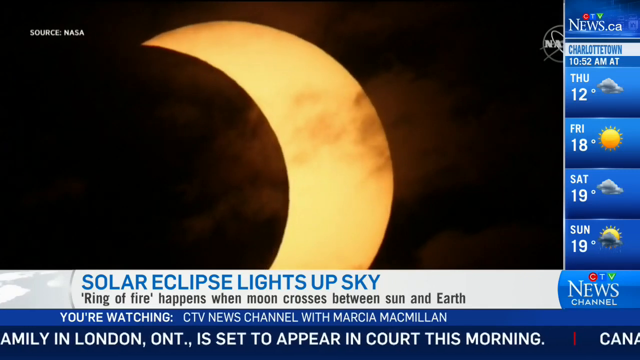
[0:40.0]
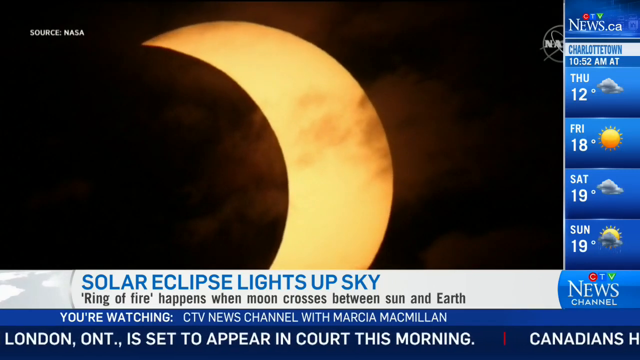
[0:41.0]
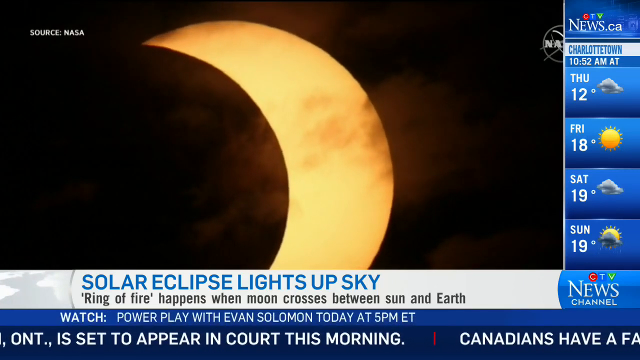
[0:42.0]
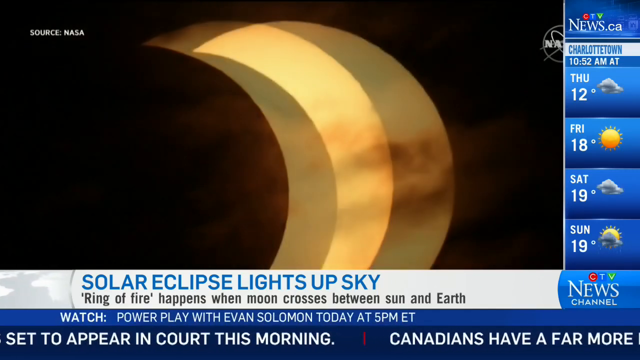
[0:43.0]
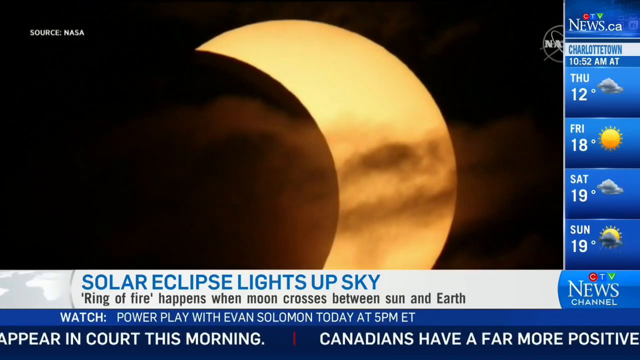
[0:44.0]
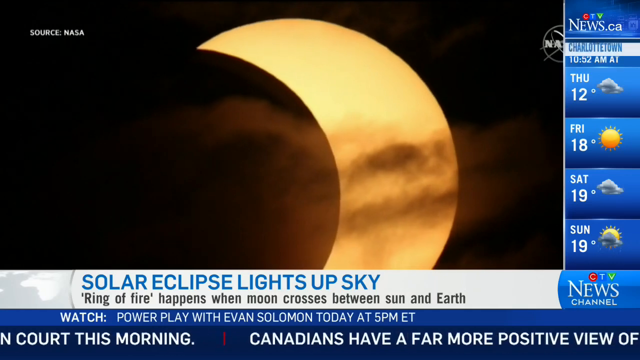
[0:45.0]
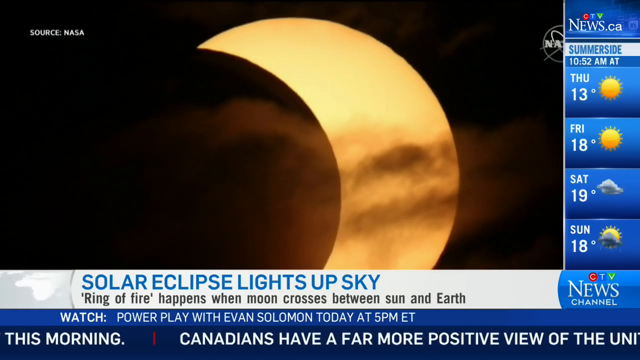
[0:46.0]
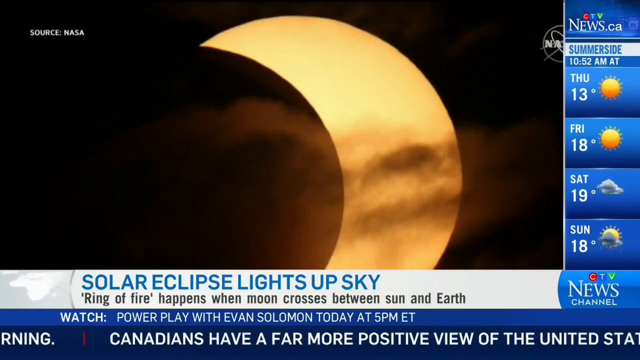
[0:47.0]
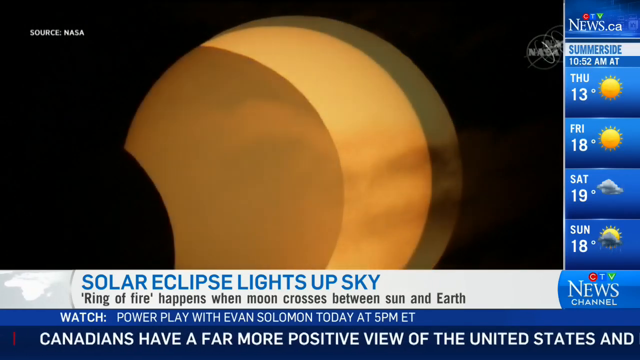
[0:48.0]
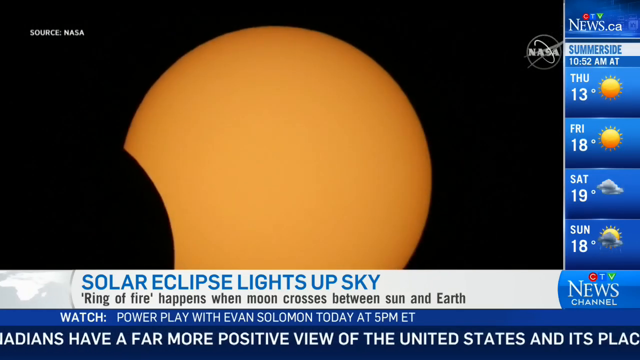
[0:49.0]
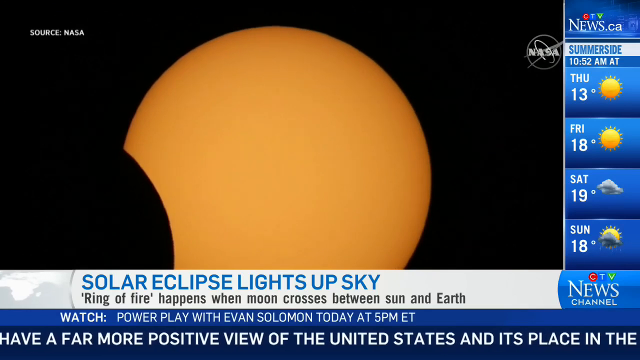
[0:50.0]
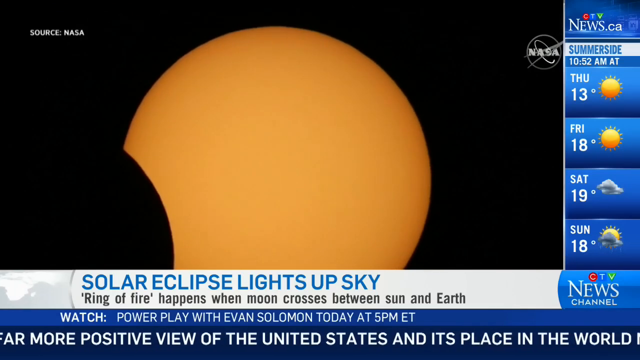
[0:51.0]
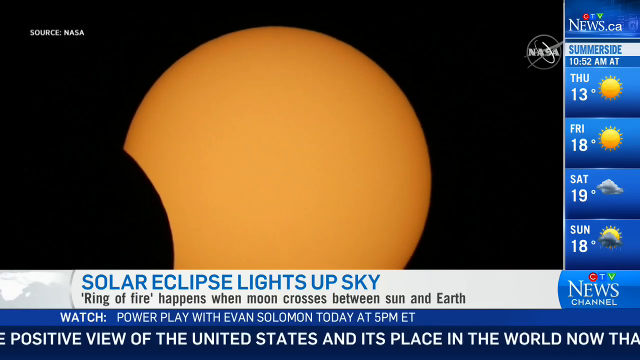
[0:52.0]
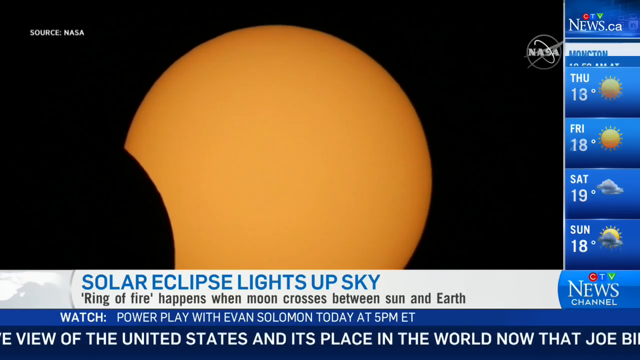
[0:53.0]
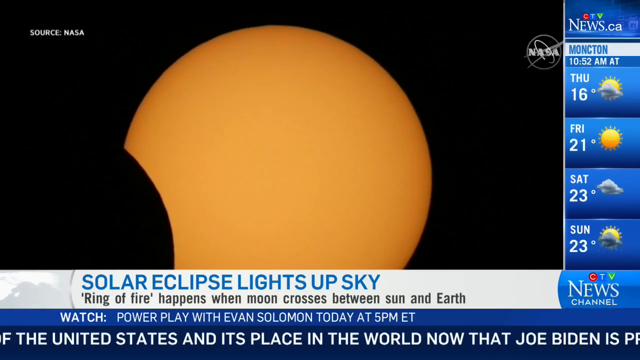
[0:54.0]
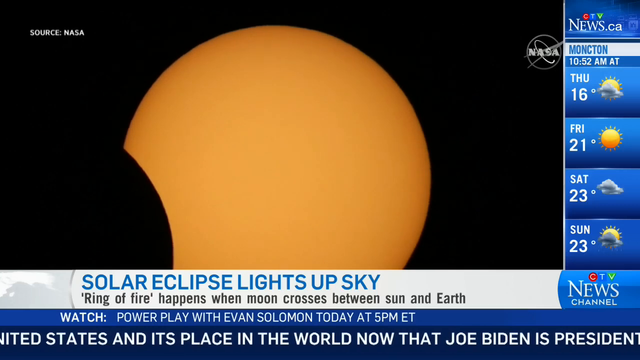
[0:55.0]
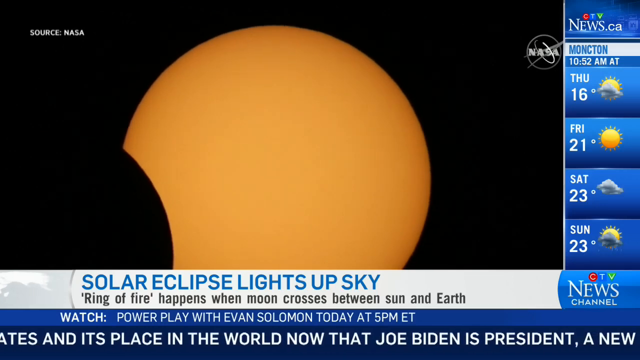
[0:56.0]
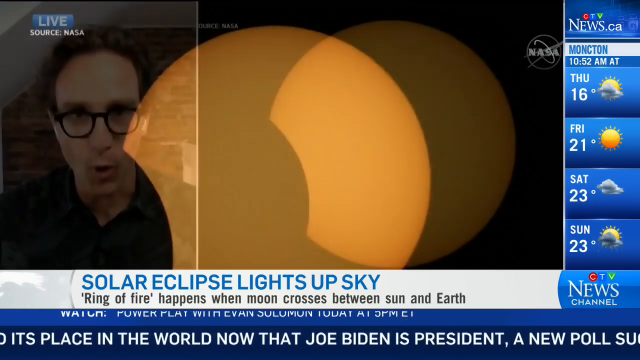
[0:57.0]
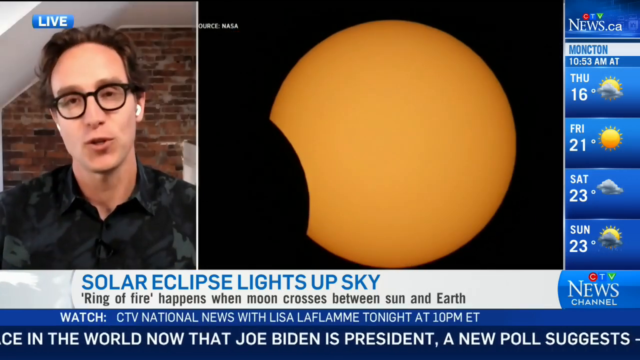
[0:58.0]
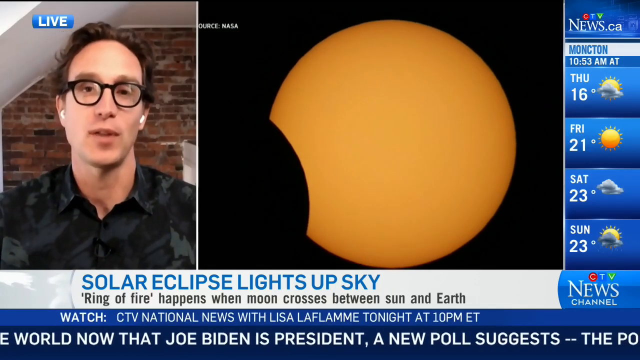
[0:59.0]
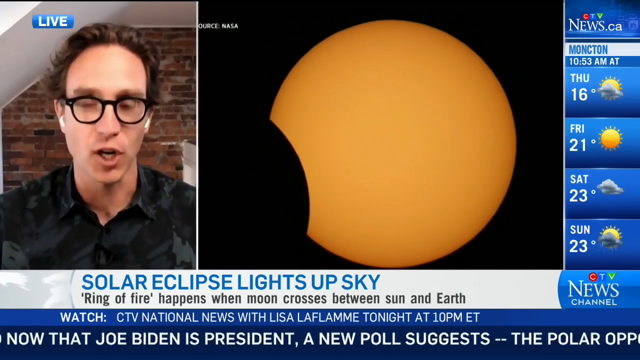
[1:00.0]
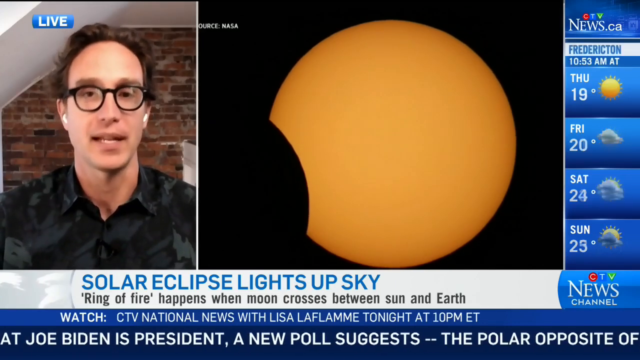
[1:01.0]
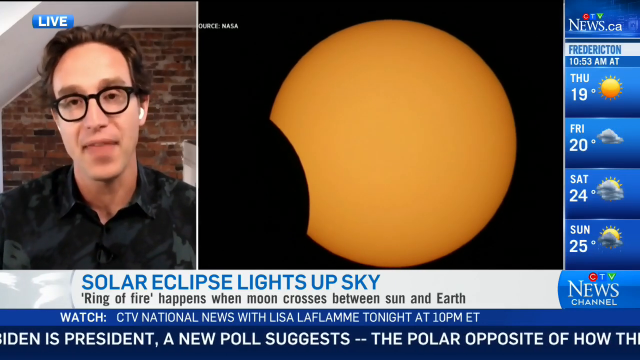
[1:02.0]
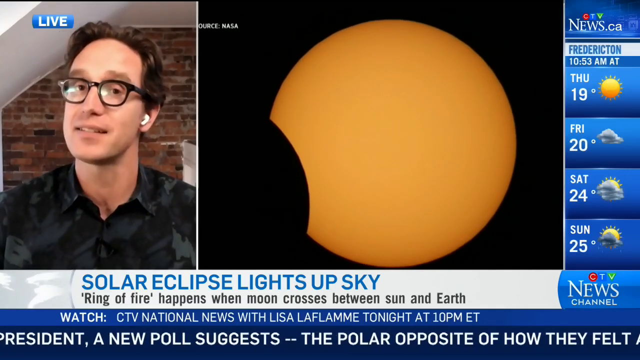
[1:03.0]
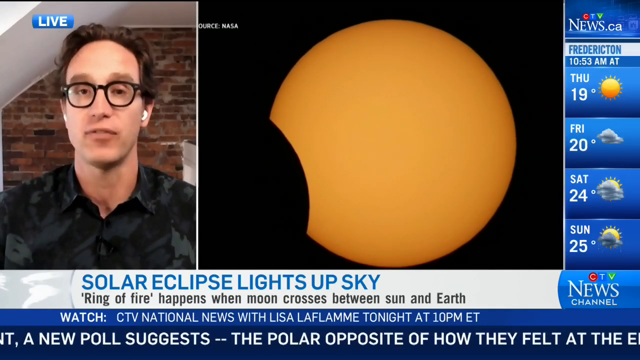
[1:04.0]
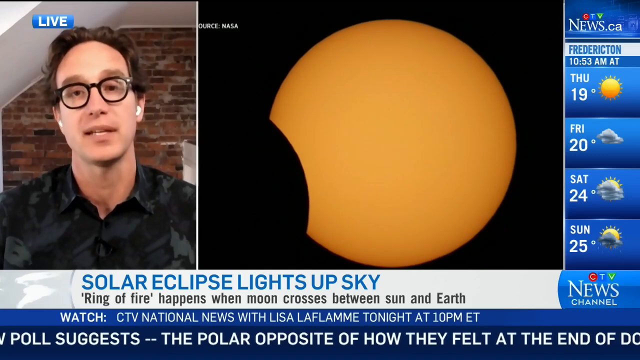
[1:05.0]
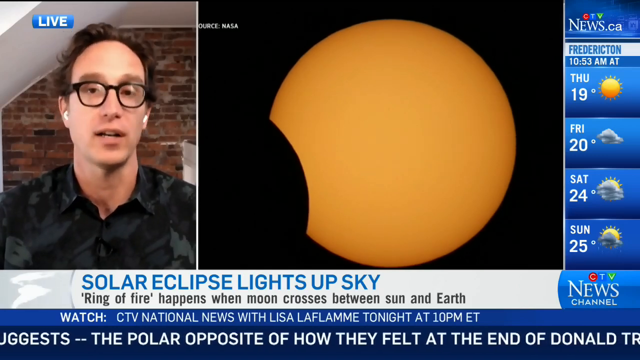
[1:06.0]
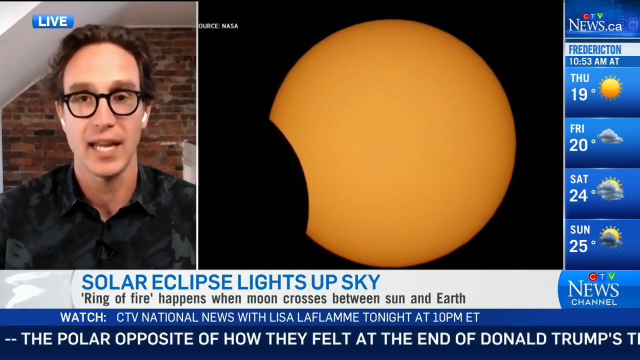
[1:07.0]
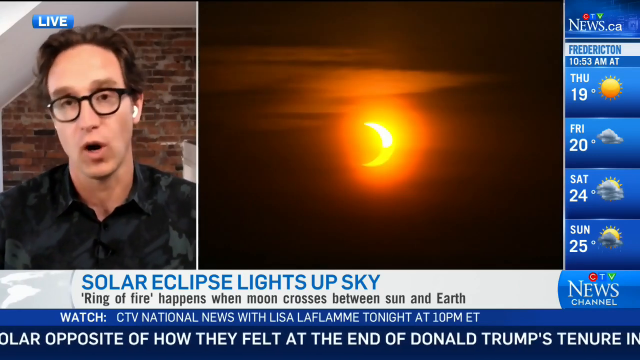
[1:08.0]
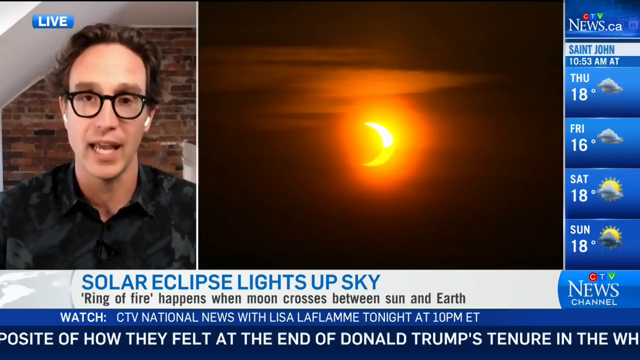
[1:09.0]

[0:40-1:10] The camera zooms in on the moon, and as it zooms the moon becomes fuller and fuller. The man reading the news is then shown on the next slide. Next to the screen, weather listings for different places appear: one at 10:52 am shows Tuesday 12 degrees, Friday 18 degrees, Saturday 19 degrees and Sunday 19 degrees; another shows 13 degrees, then Friday 18 degrees, Saturday 19 degrees and Sunday 18 degrees; another shows Tuesday 16 degrees, Friday 21 degrees, Saturday 23 degrees and Sunday 23 degrees; and another at 10:53 am shows Thursday 19 degrees, Friday 20 degrees, Saturday 24 degrees and Sunday 25 degrees.